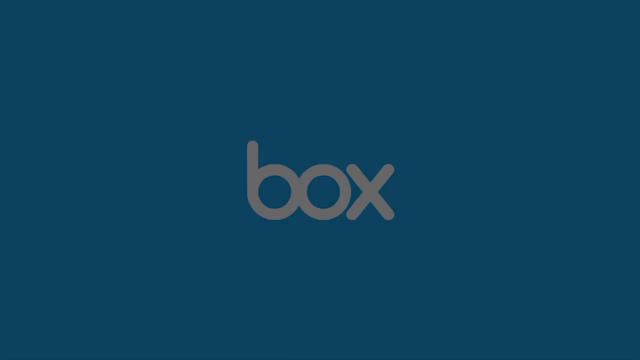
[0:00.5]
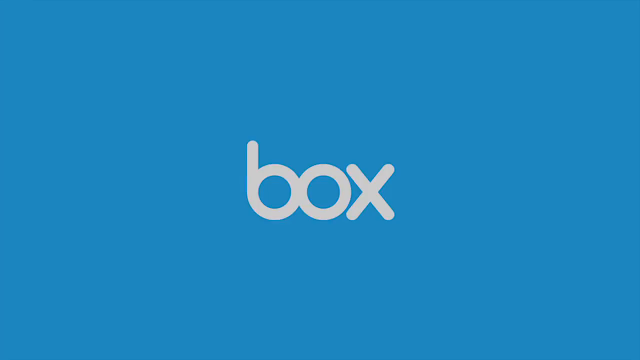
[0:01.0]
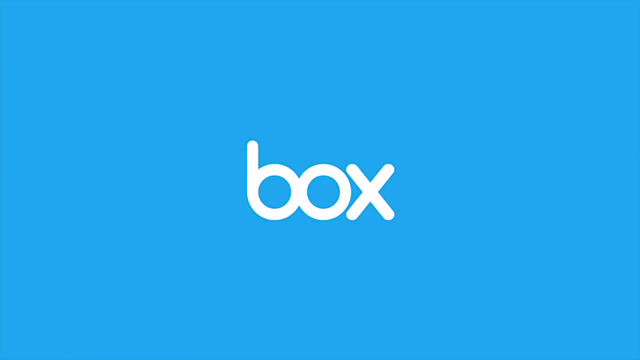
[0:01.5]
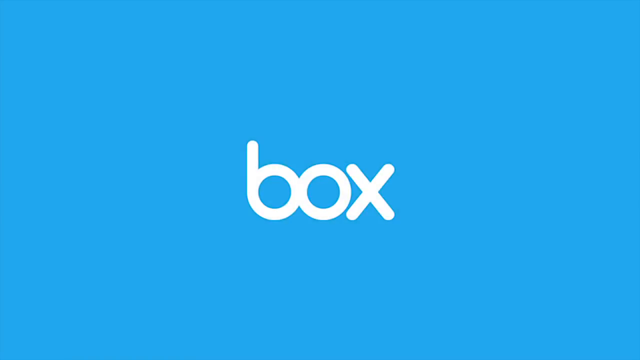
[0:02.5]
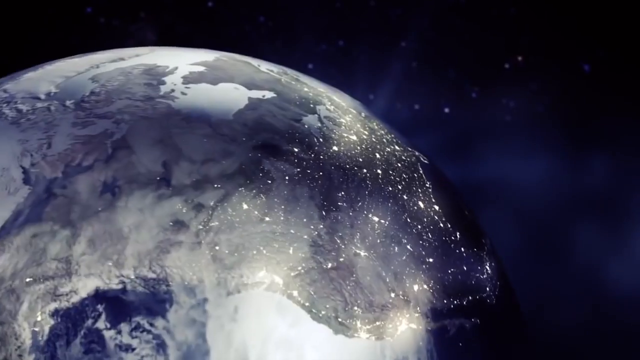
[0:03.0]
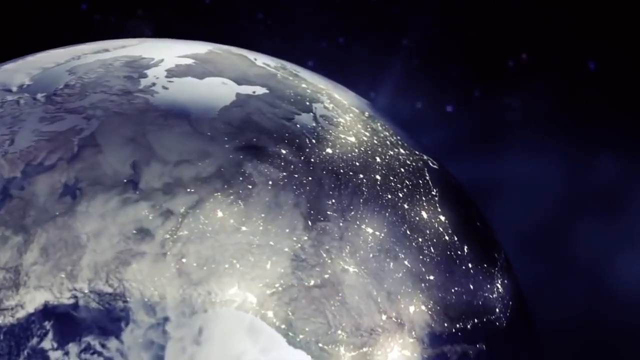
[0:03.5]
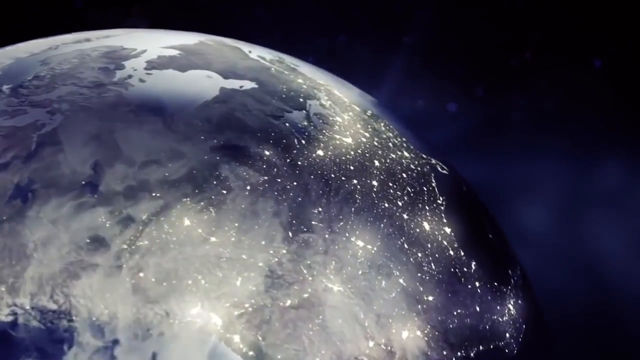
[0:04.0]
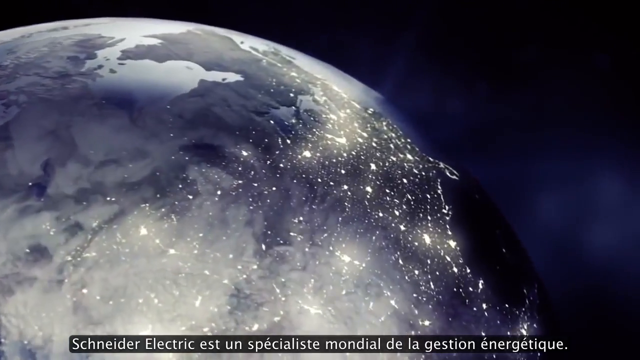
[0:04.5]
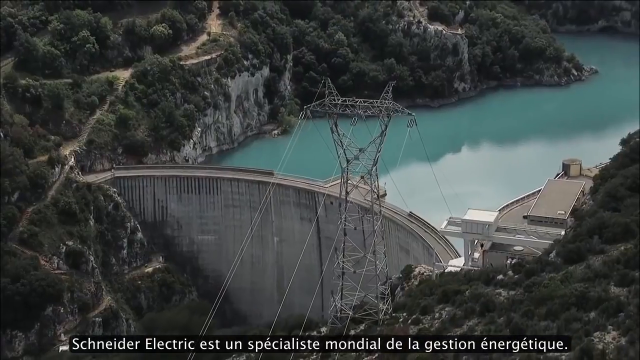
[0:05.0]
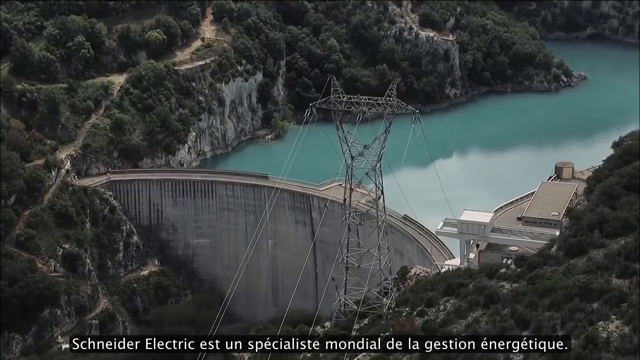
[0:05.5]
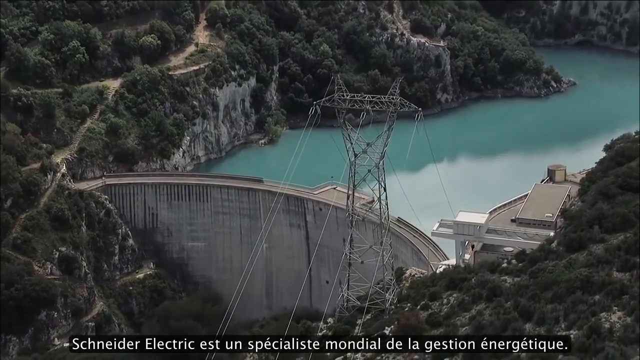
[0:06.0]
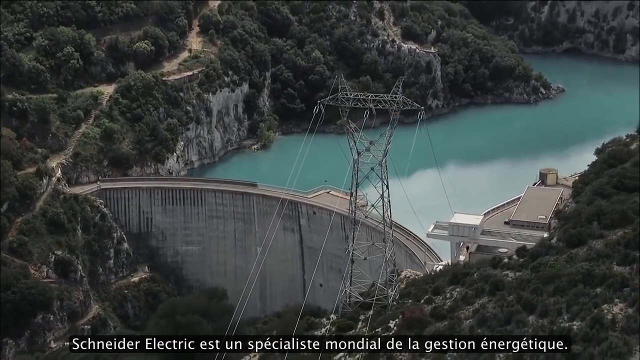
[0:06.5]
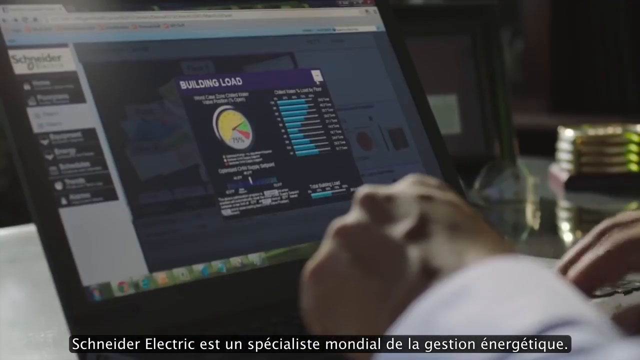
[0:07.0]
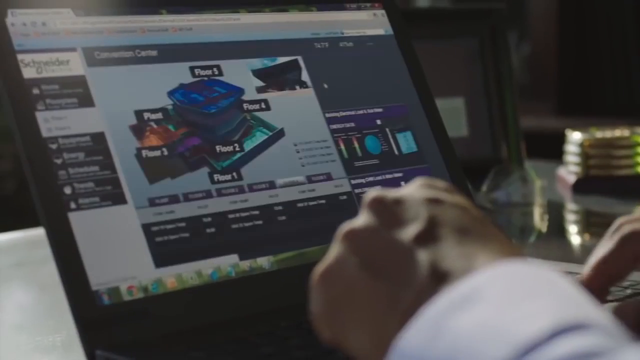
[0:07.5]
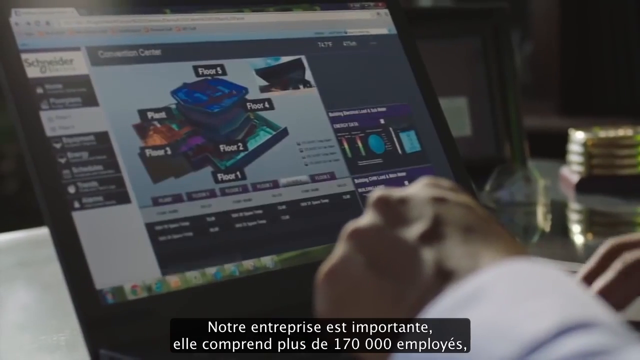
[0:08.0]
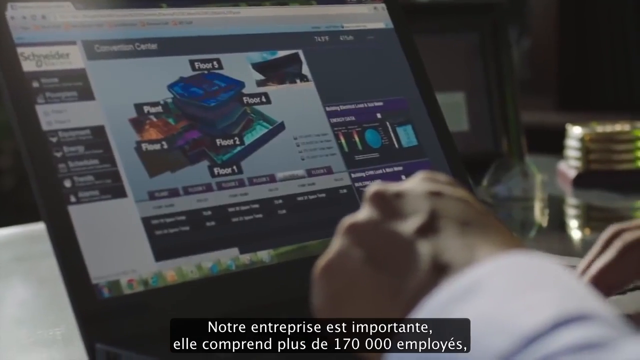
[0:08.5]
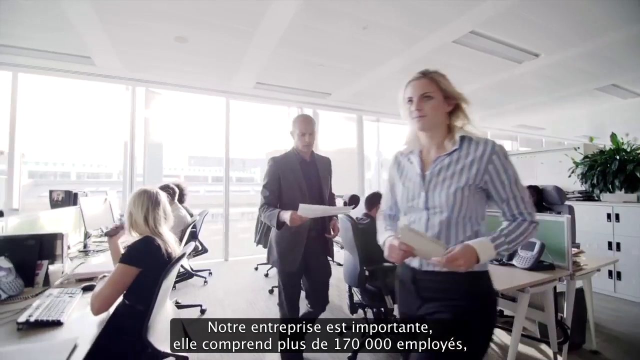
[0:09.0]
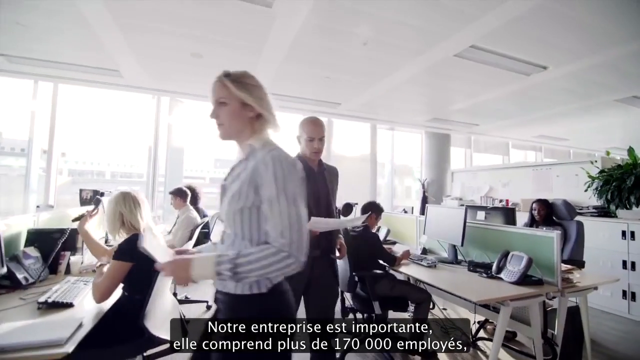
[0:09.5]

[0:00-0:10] A white box appears first. Next comes a dam where the electricity comes from, followed by a computer image of someone at a computer who seems to be browsing. The scene then moves to people working in an office on what looks like a busy day: people move up and down the office, some are busy at their desktops, some hand over papers, and some are recording things.